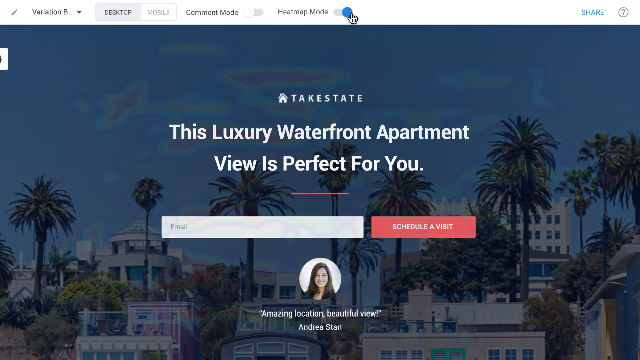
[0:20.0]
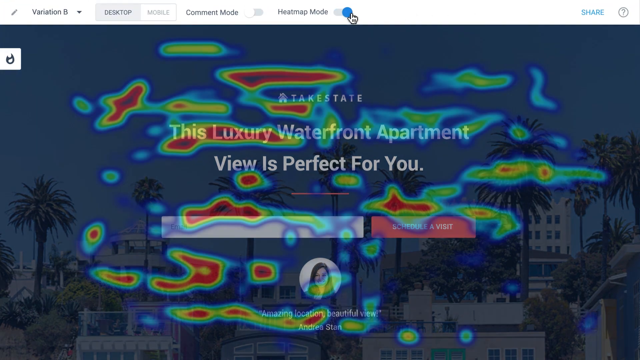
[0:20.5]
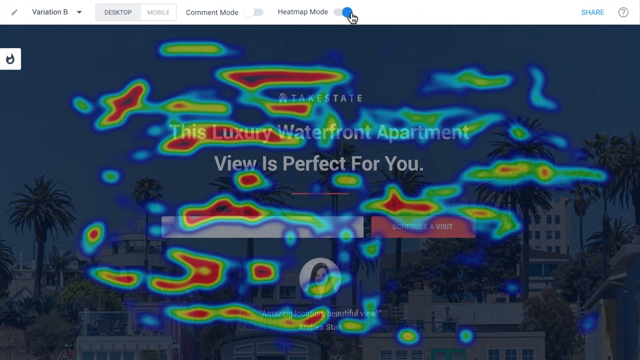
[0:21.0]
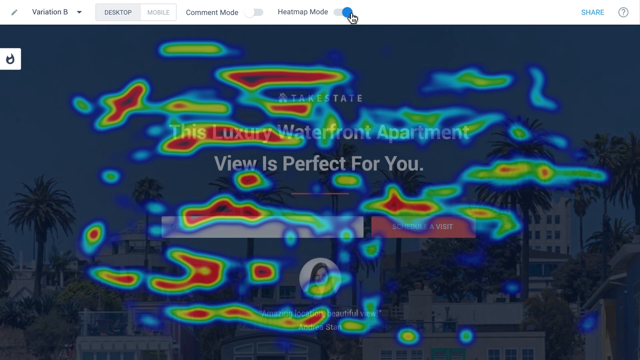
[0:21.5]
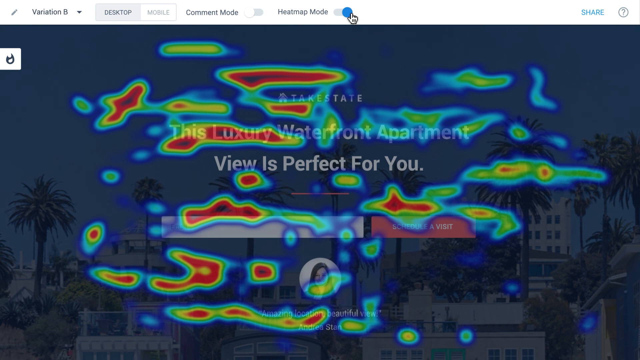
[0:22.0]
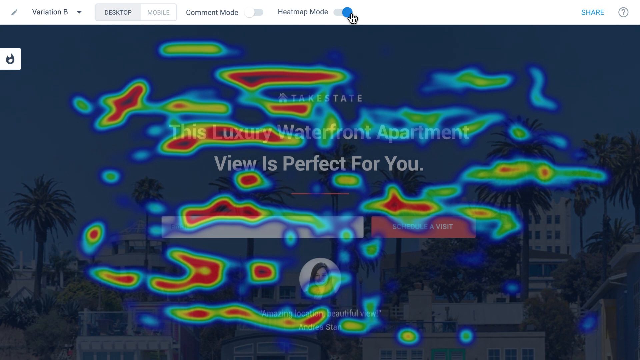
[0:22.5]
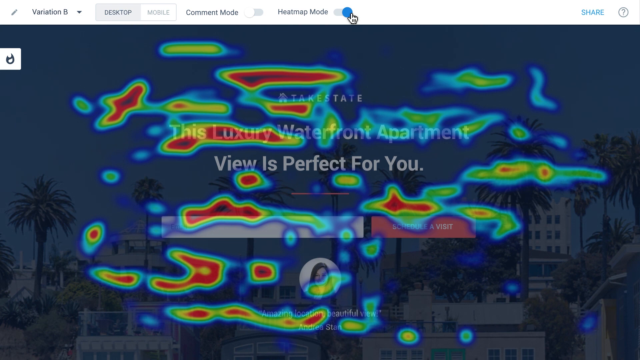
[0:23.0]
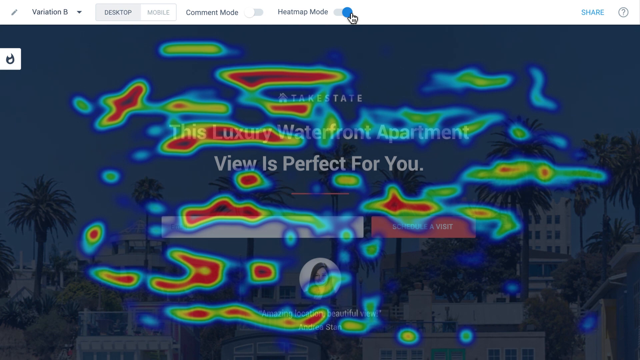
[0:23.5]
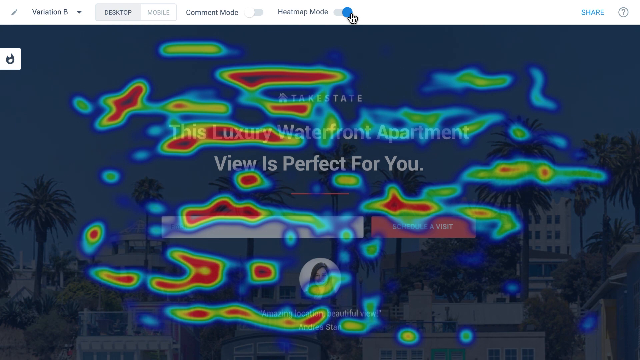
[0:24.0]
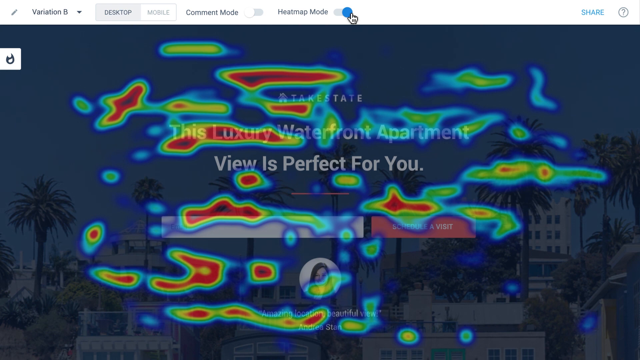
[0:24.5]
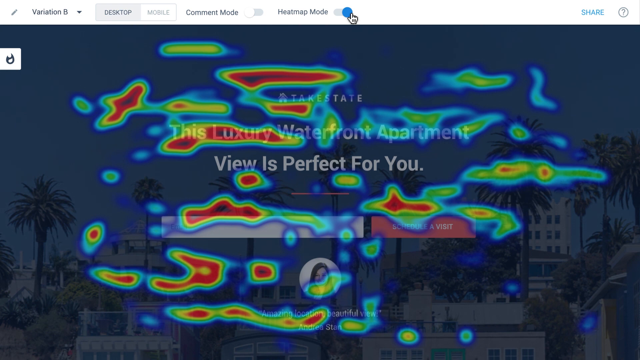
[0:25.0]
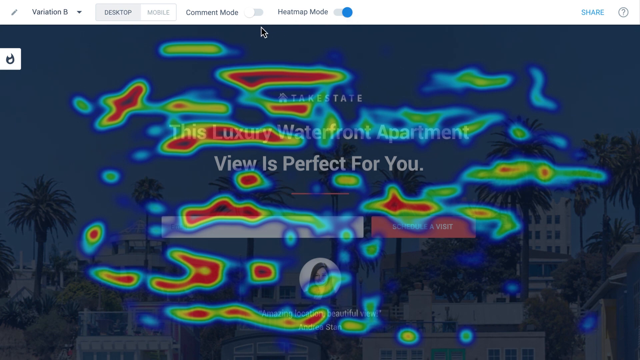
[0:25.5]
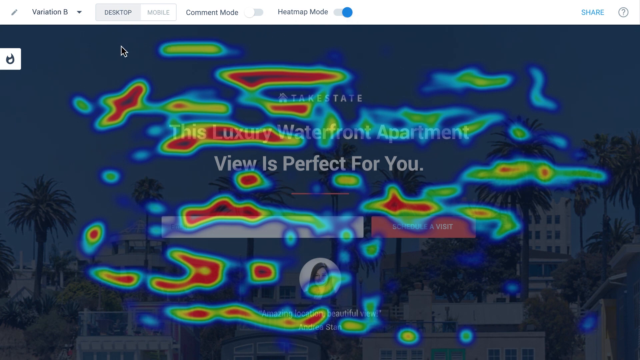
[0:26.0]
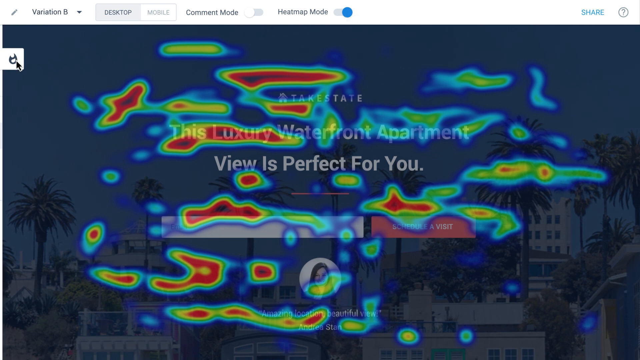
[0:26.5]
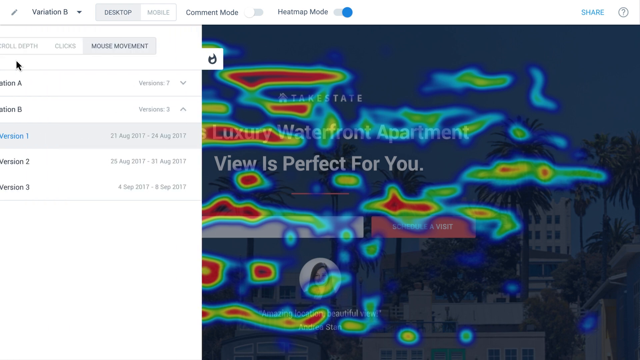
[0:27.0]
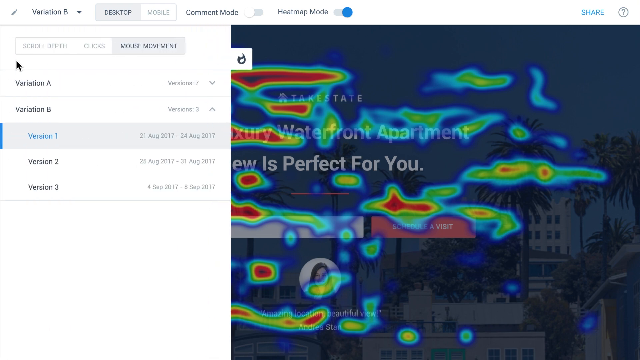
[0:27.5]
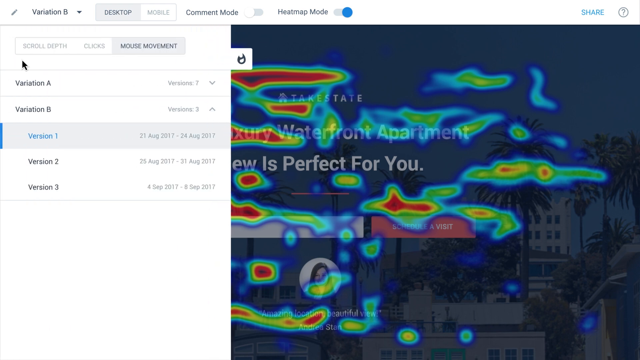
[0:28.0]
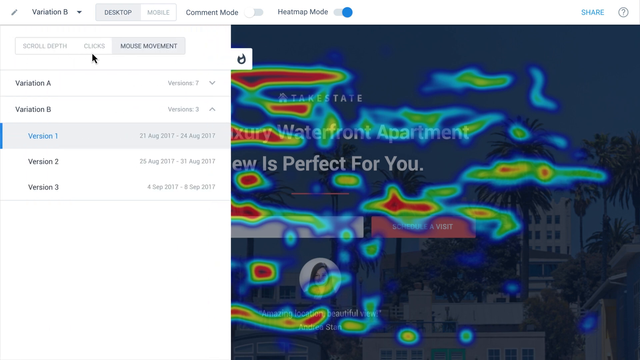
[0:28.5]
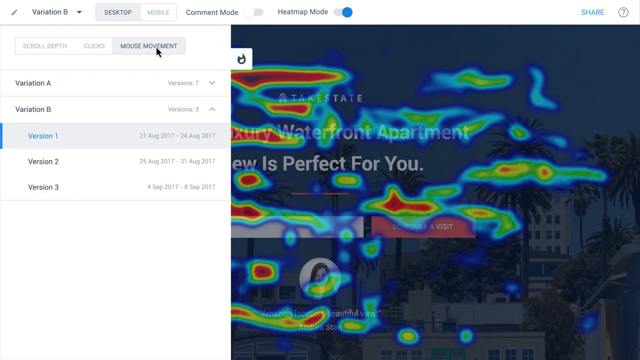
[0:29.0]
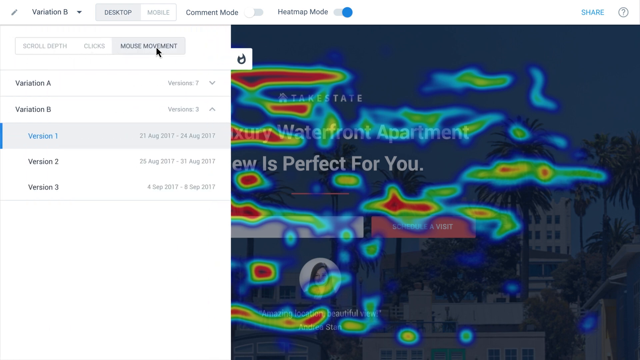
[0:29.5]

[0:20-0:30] The image darkens, and irregular shapes in red, green, yellow and blue appear on the screen, the center of each usually red. A menu slides in on the left side and the cursor clicks on mouse movement. Below, Variation A and Variation B are listed; Variation B is expanded, showing Version 1. Most of the bigger irregular shapes in the heat map have red in them, and some have a black center. Some of the smaller ones are just a little green and blue with a blue outline.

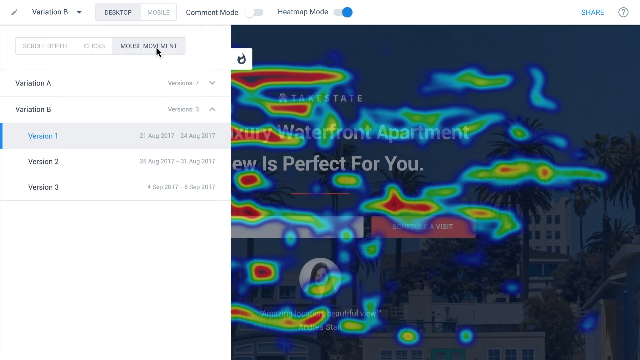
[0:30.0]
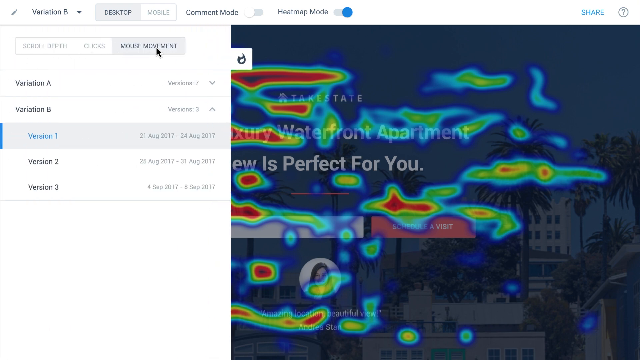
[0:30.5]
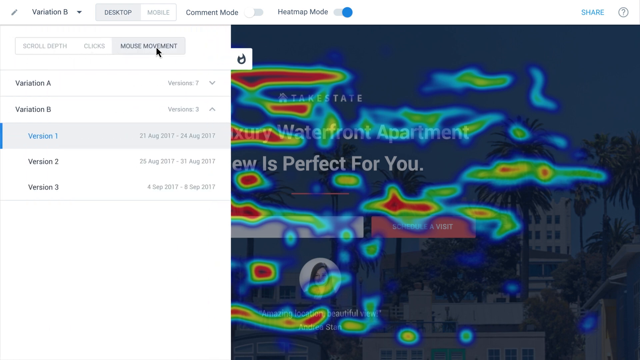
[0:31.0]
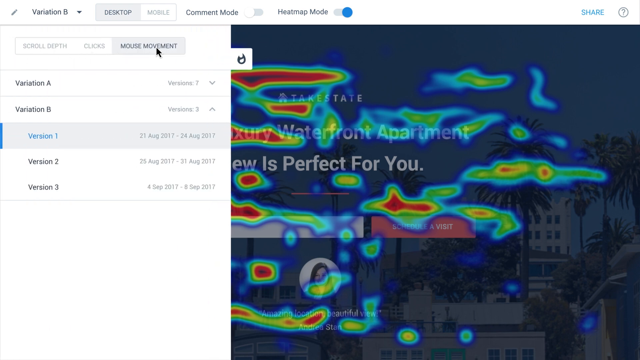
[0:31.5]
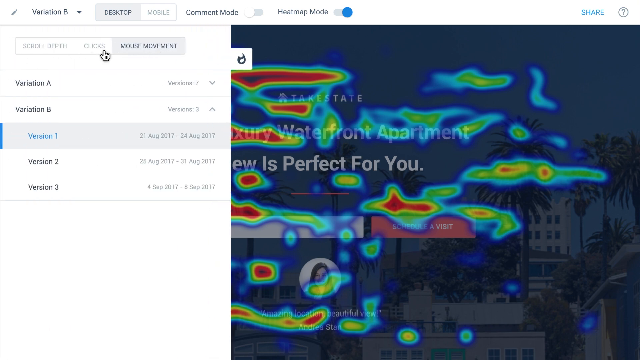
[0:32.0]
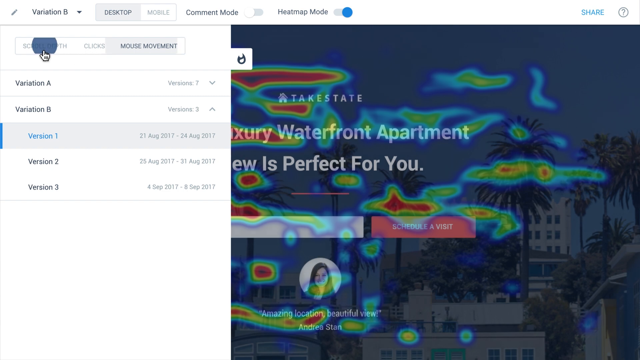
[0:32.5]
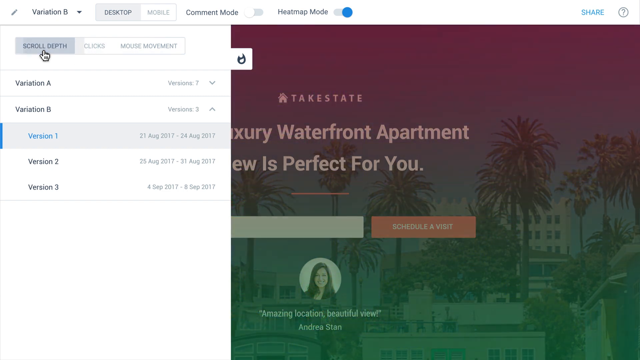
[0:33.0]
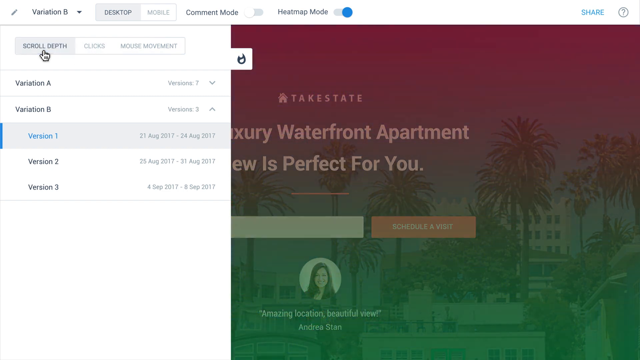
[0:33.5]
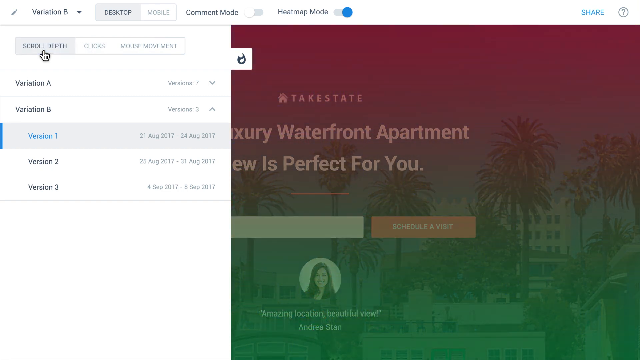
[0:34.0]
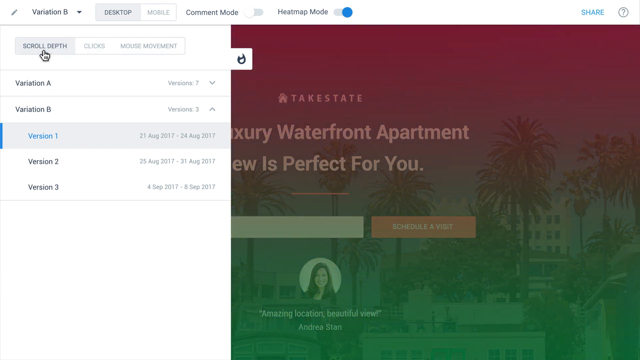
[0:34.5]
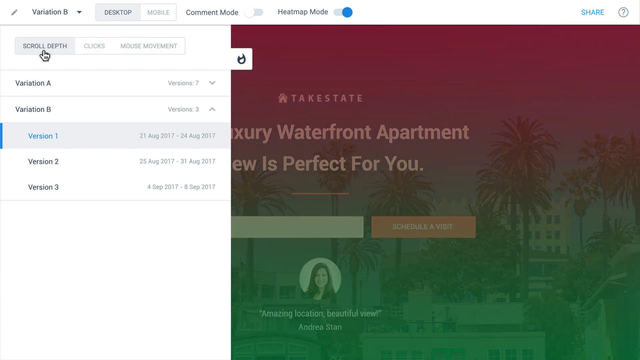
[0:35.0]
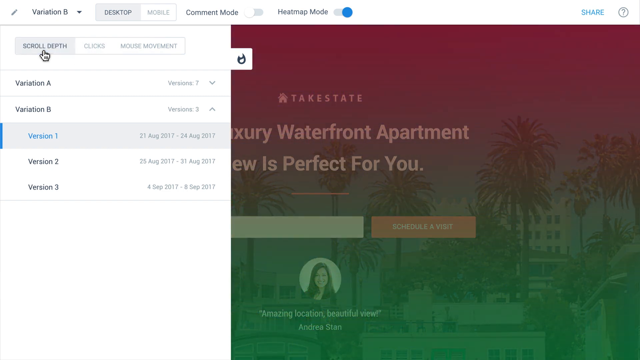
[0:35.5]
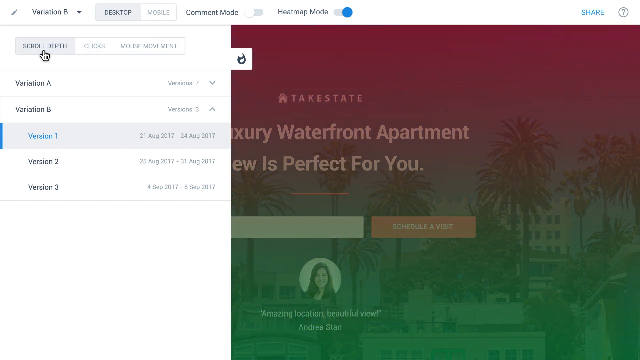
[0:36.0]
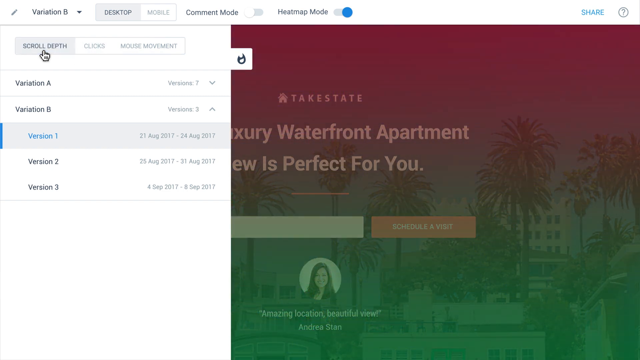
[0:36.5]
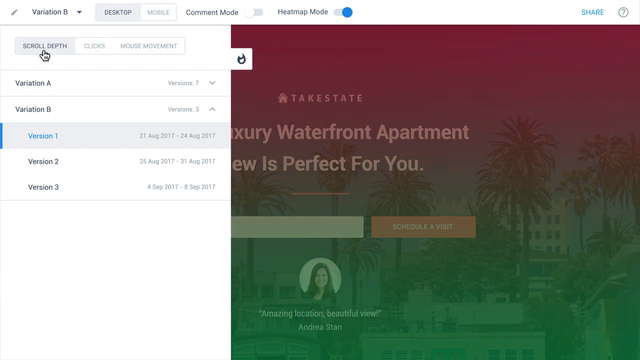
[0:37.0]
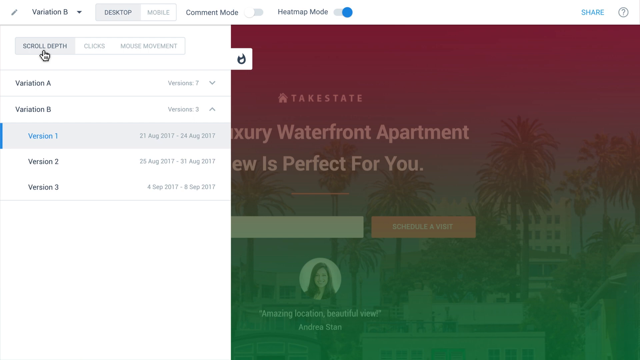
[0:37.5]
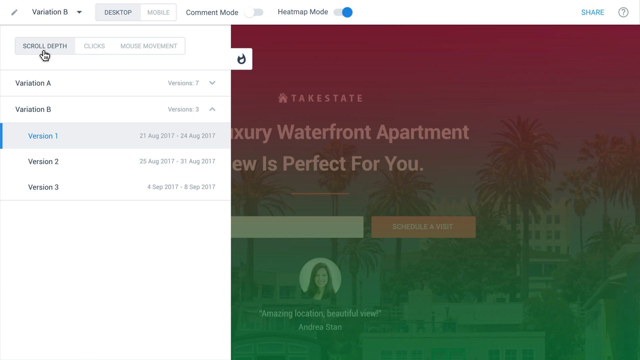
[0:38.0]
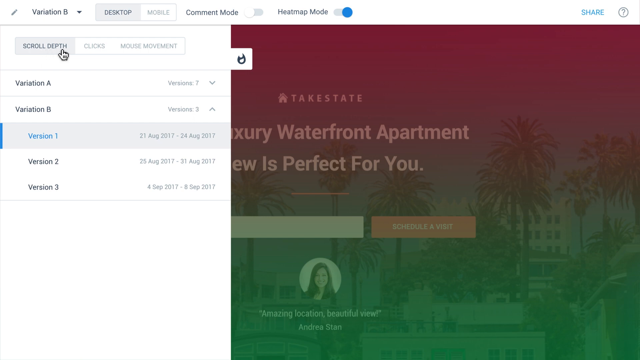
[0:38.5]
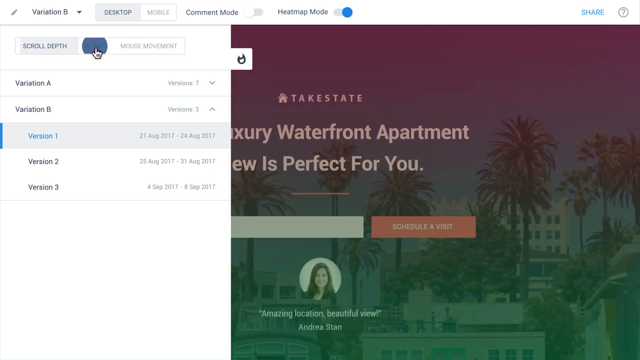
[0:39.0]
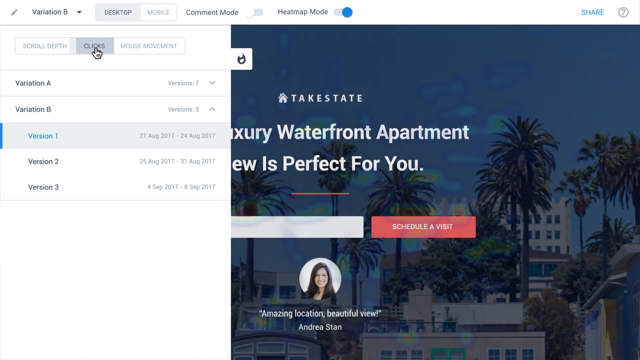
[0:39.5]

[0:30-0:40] The menu options open, and the cursor moves to the left side and clicks on scroll depth, which becomes highlighted. The cursor then slides to the center option and clicks it, and it is highlighted. The heat map vanishes and the luxury waterfront apartment landing page is there, now covered by a shade of red that is almost cloudy looking on the top half, with the bottom half green; the color covers the whole page. When they click on Clicks, the page goes back to normal, and a little bit of the heat map starts to show through.